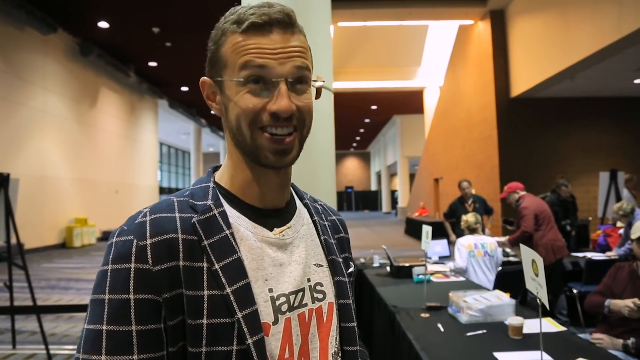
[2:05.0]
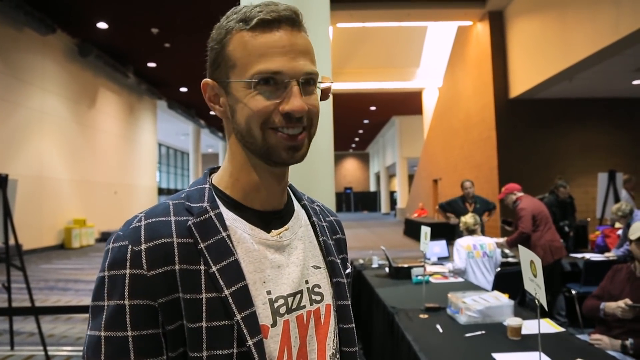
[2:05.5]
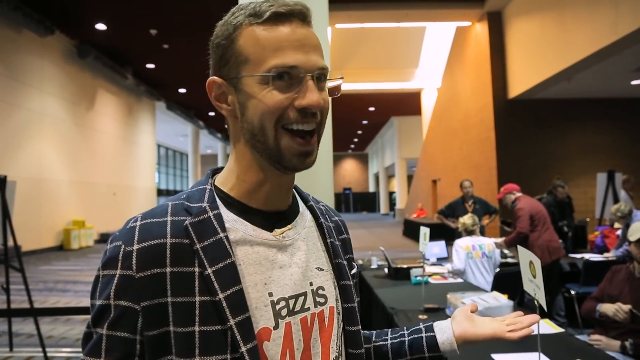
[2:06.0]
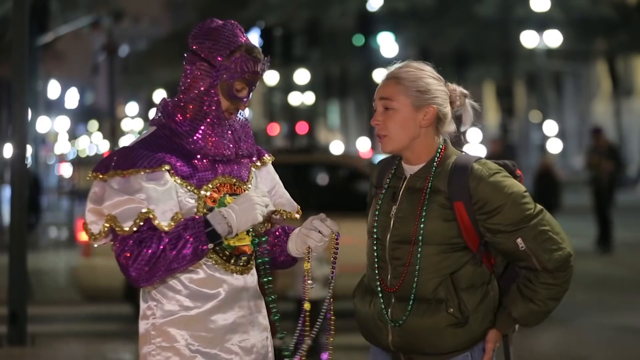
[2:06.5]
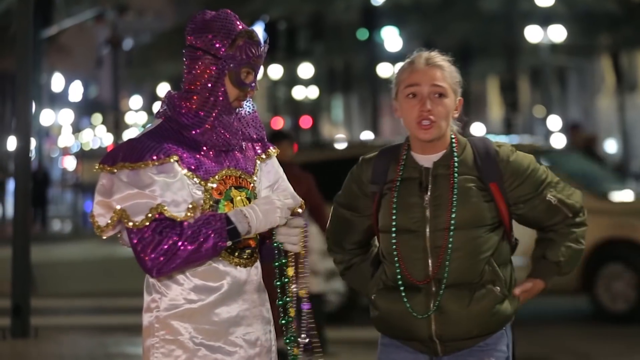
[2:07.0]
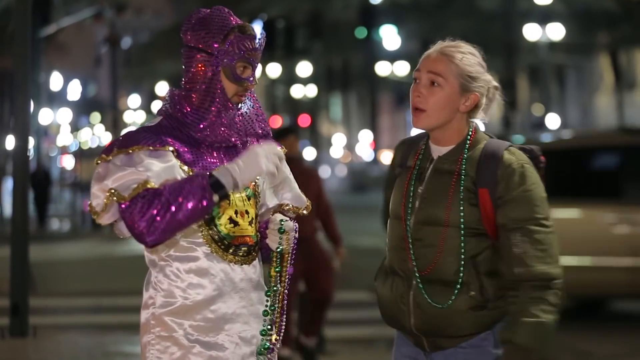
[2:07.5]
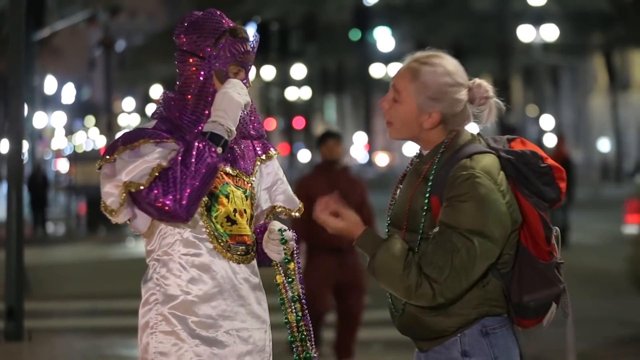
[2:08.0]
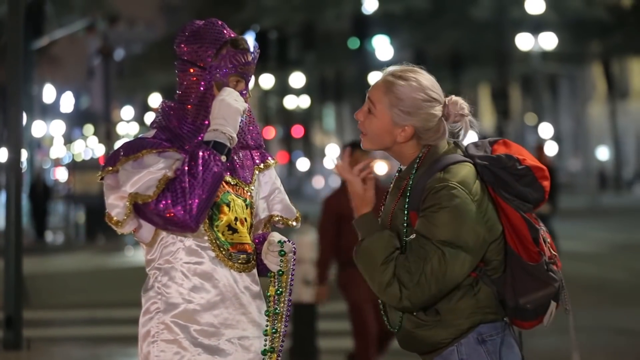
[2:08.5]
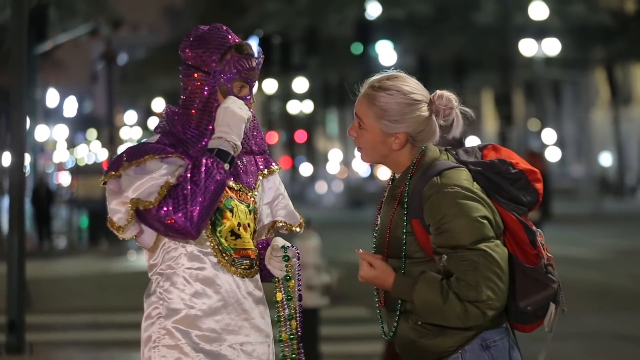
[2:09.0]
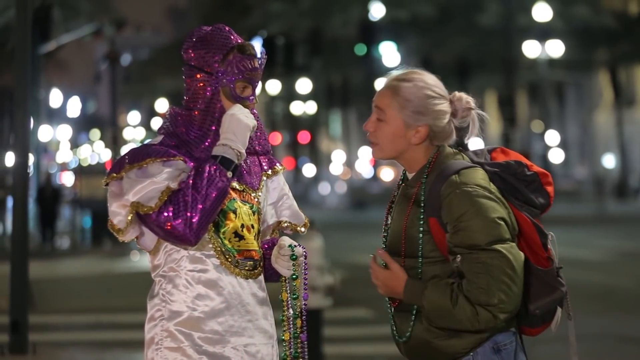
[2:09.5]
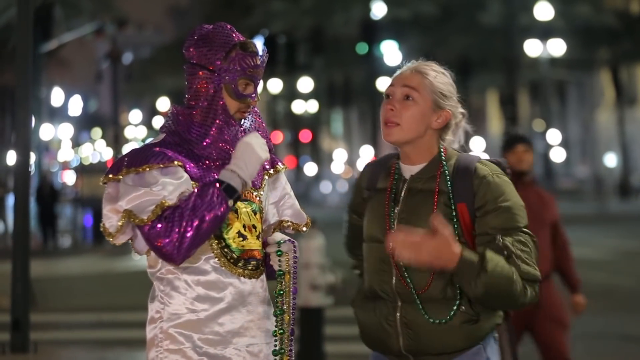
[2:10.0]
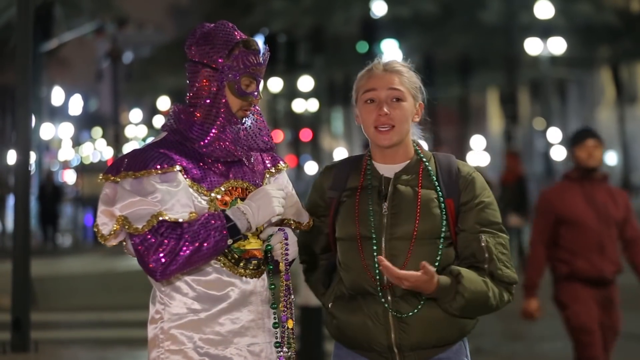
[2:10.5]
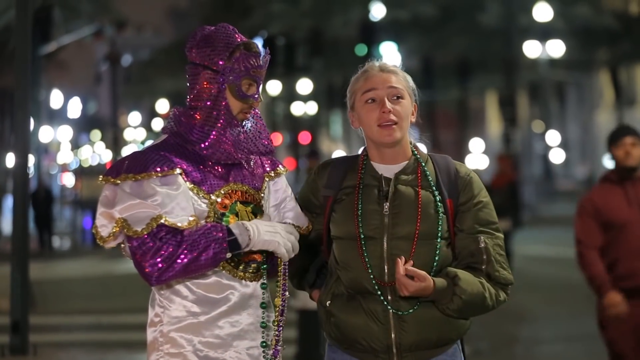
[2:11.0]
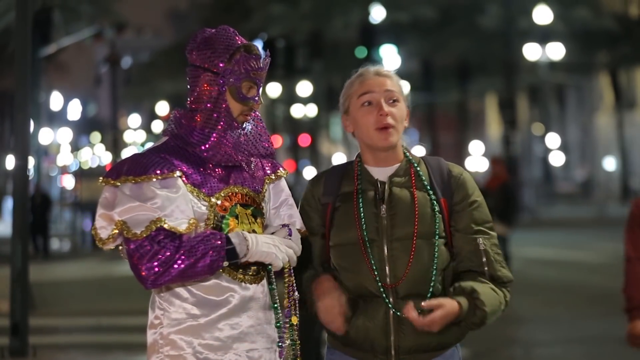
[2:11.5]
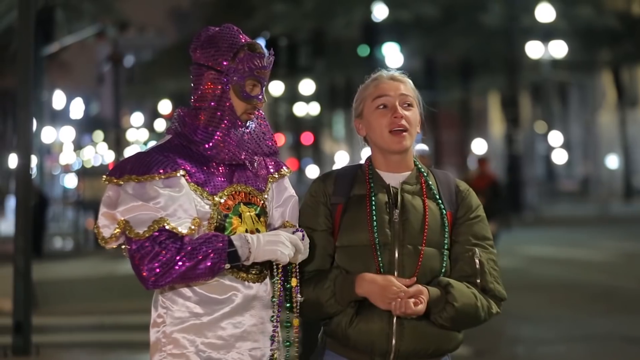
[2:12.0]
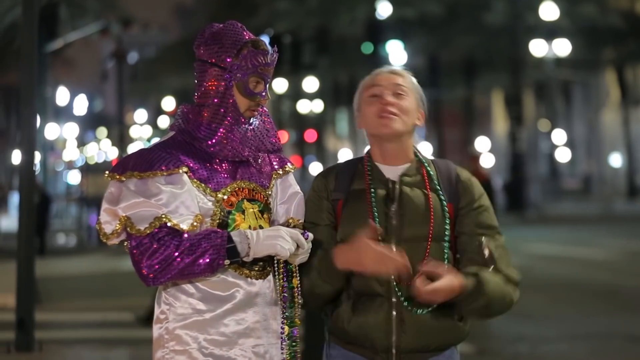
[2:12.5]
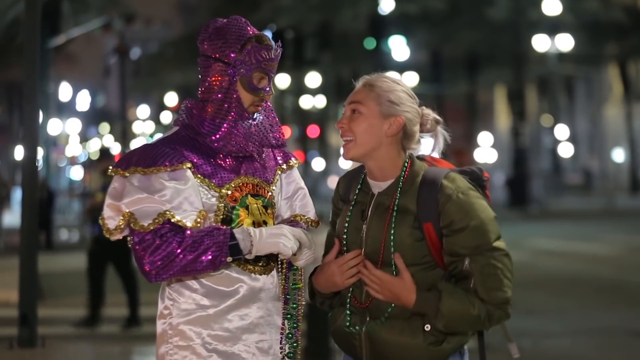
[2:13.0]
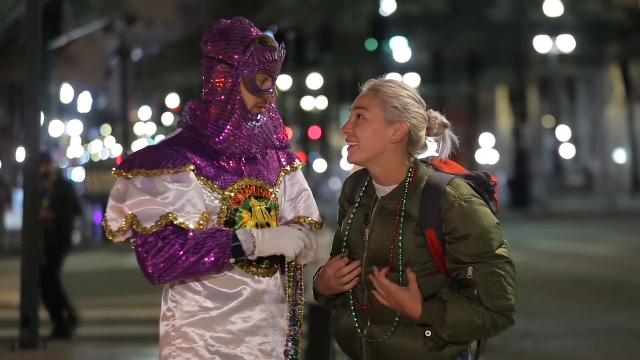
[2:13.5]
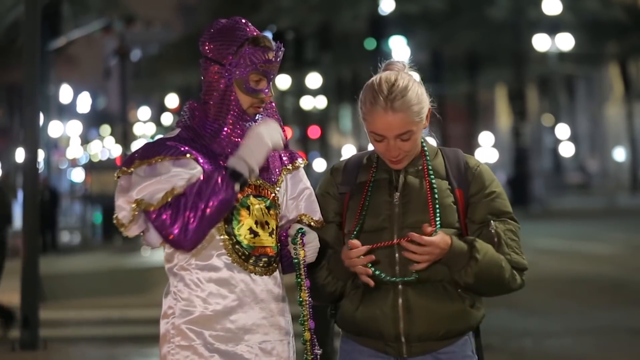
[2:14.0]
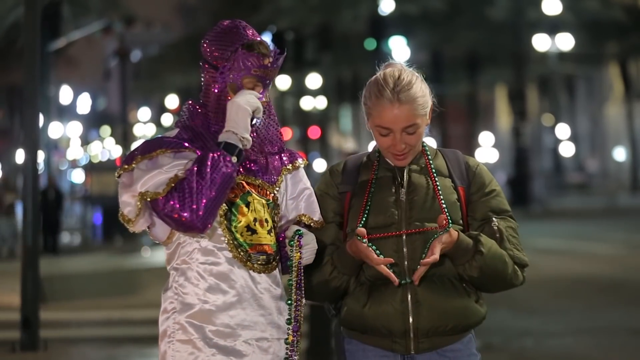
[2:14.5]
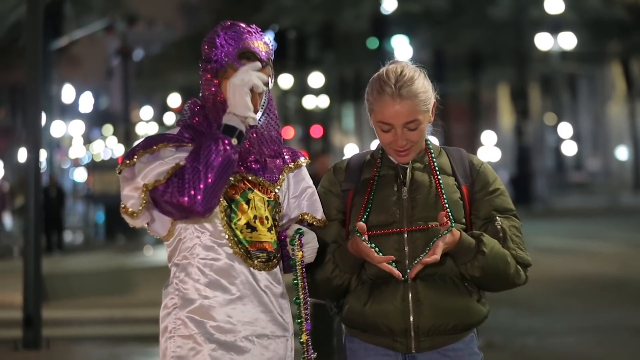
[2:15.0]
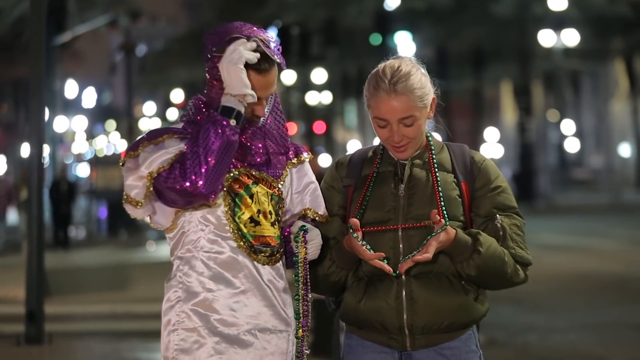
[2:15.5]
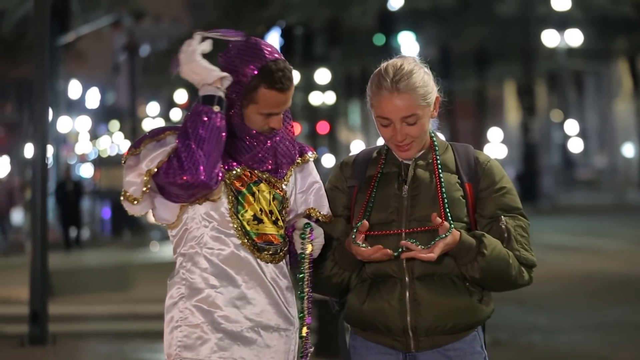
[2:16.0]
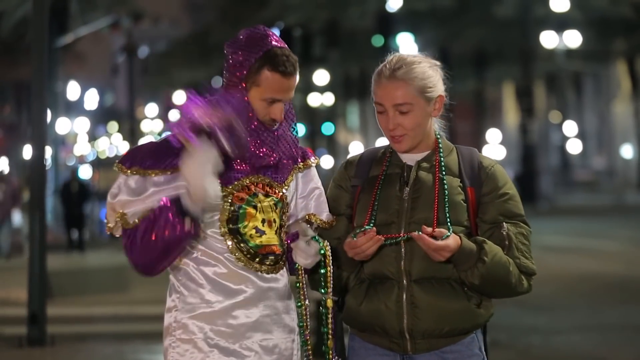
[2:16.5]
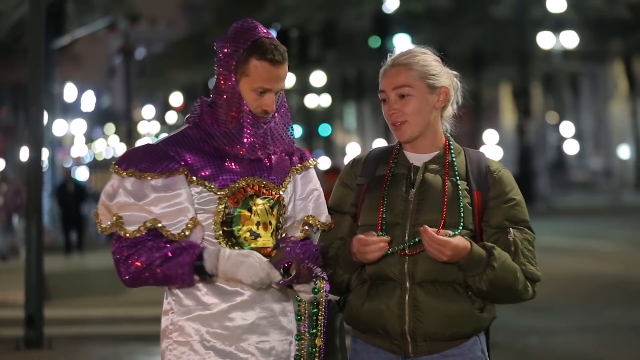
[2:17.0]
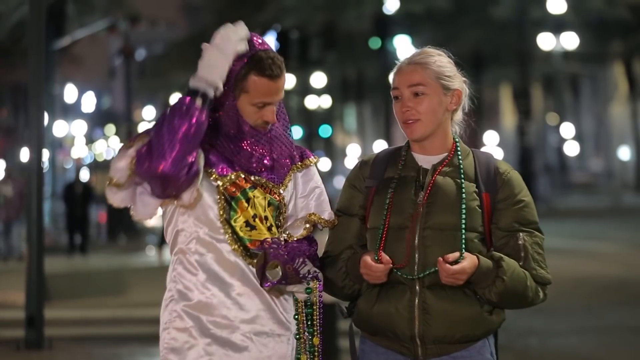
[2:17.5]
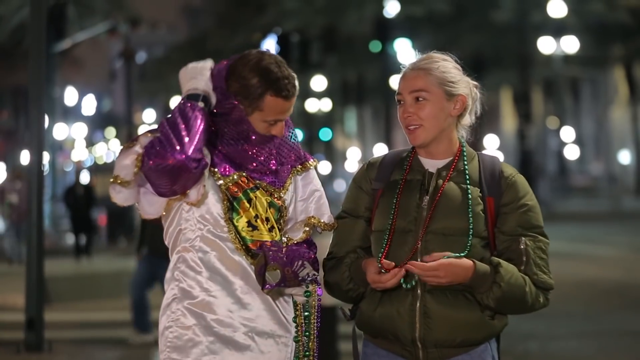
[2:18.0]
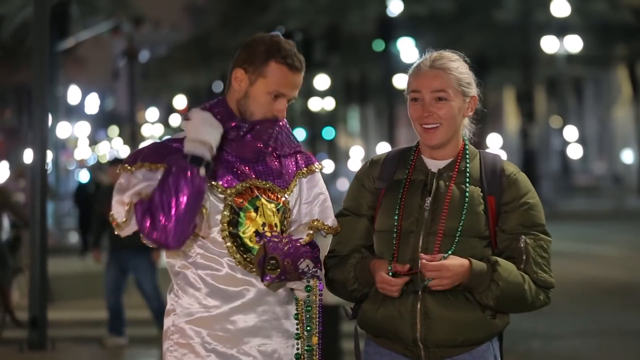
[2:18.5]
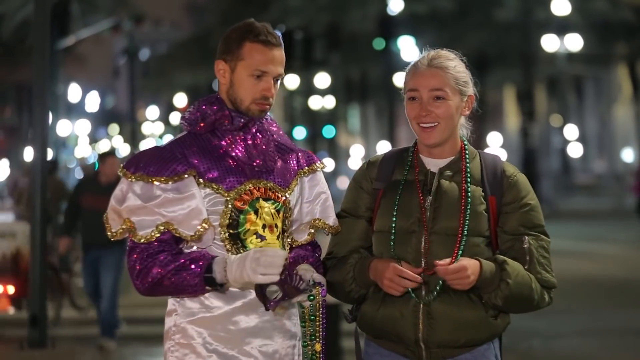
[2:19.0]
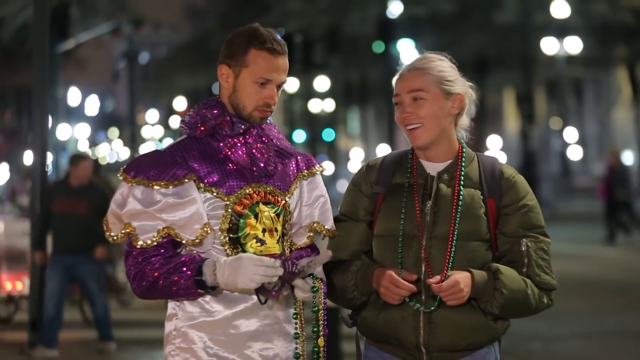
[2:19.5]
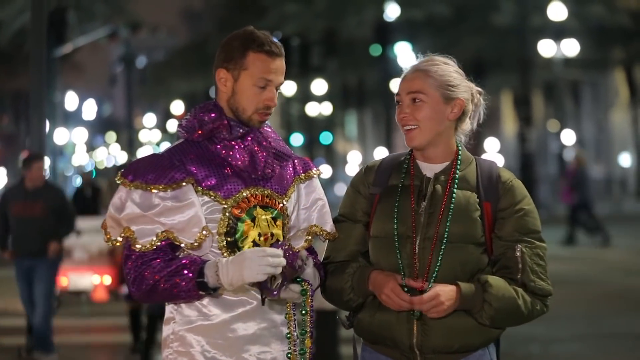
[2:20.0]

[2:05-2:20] A man probably in his 30s, with short brown hair, a short brown beard and glasses, wears a t-shirt that says "Jazz is saxy" under an open navy blue and white plaid shirt, and talks to the camera. The scene then switches to a street at night. A woman with blonde hair pulled back into a ponytail wears a kind of olive green puffer jacket, a red backpack over both shoulders, and red and green beads around her neck. She talks with a man in a white costume with purple and a little yellow, who wears white gloves and holds many chains of beads in various colors. He takes his mask off, revealing short brown hair and a short brown beard, and they talk together; she speaks rather emphatically as he looks at her. They stand on a street with various streetlights behind them and cars moving down the street, and a passerby goes by to the side of them.